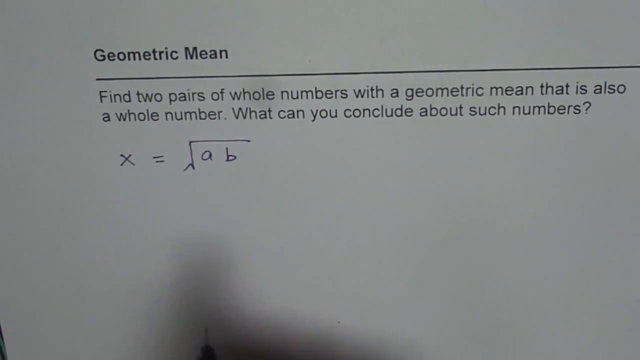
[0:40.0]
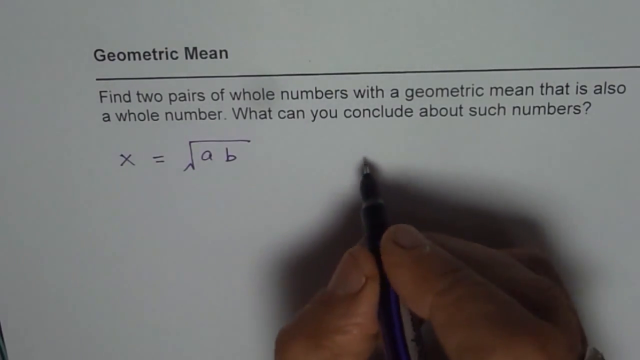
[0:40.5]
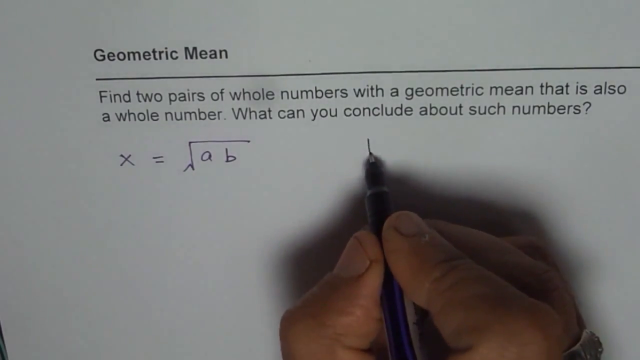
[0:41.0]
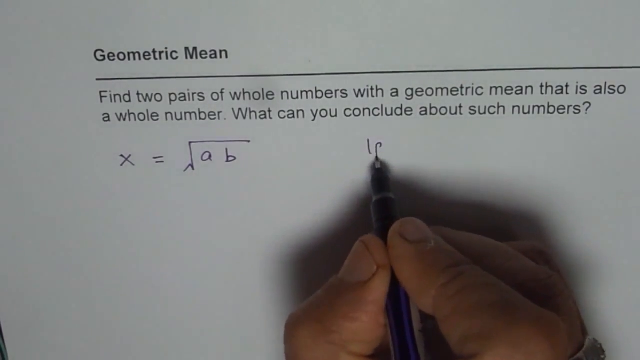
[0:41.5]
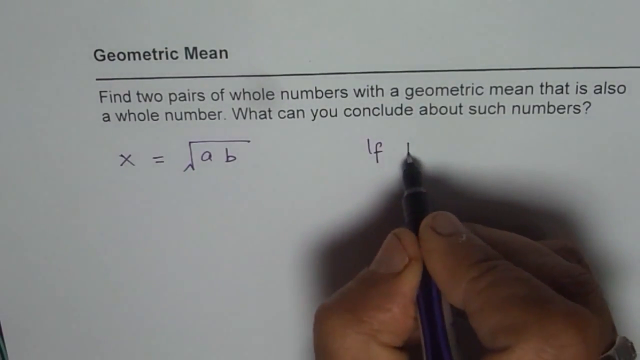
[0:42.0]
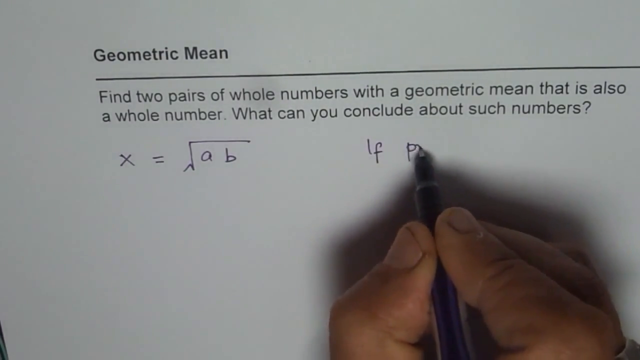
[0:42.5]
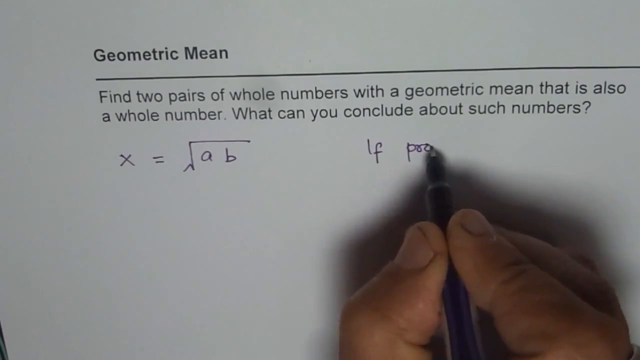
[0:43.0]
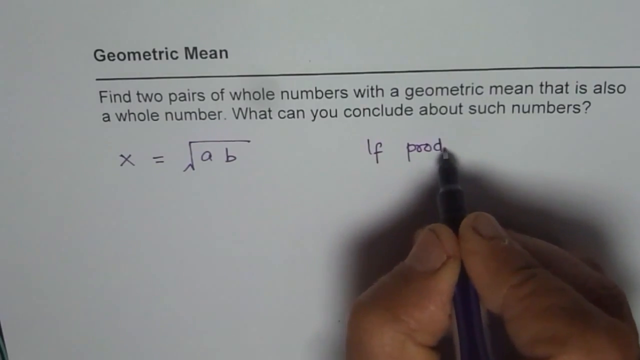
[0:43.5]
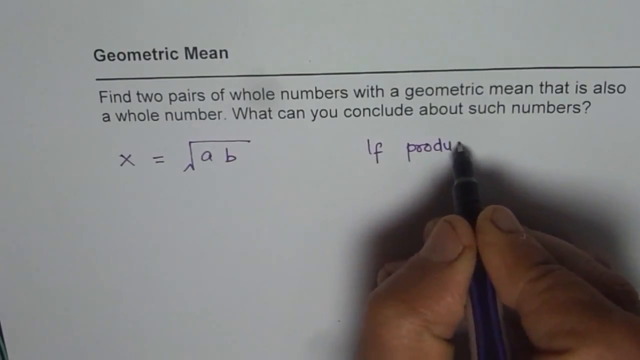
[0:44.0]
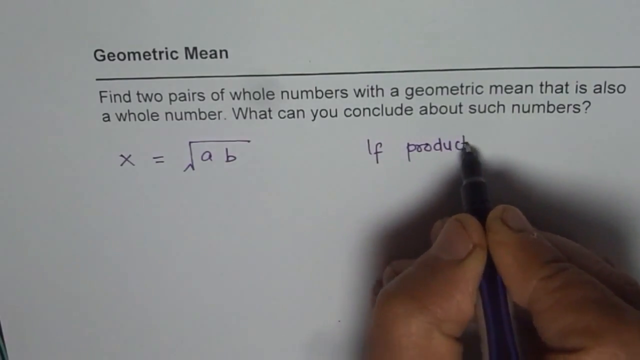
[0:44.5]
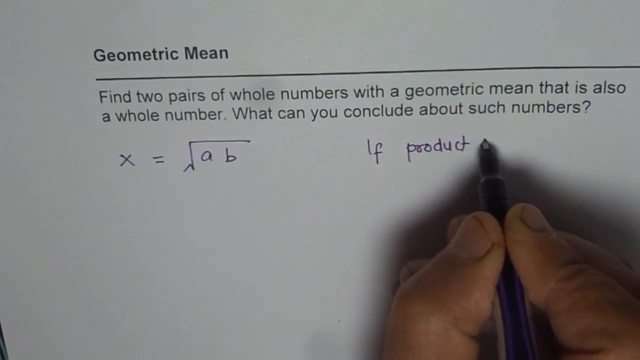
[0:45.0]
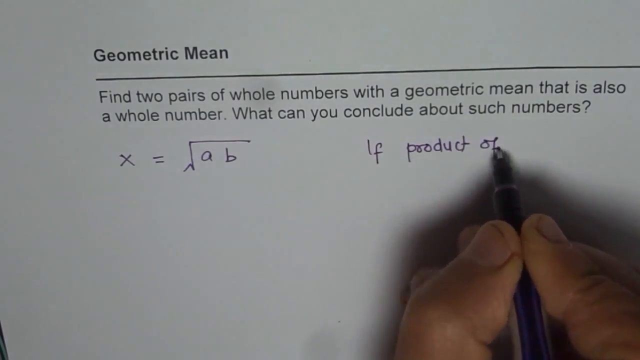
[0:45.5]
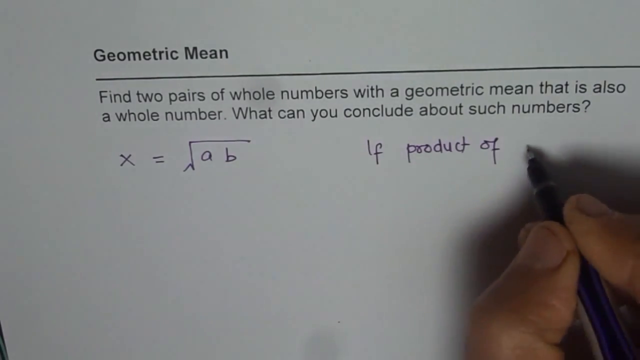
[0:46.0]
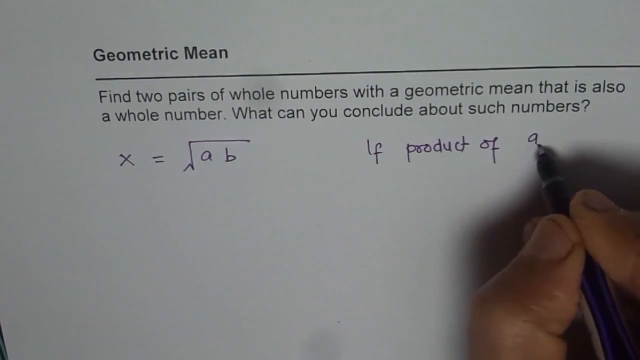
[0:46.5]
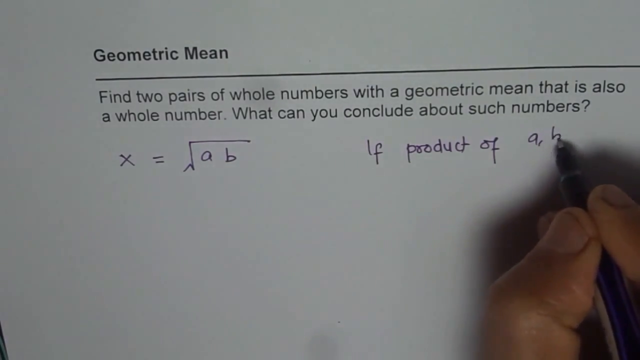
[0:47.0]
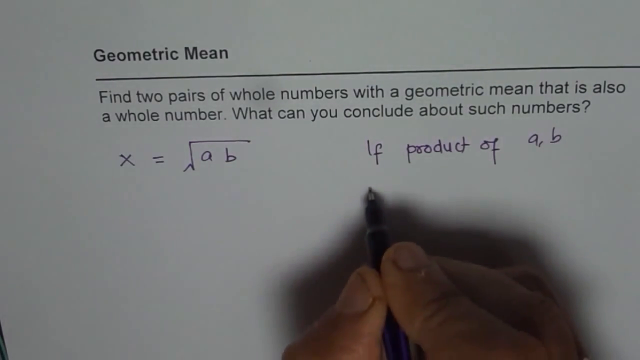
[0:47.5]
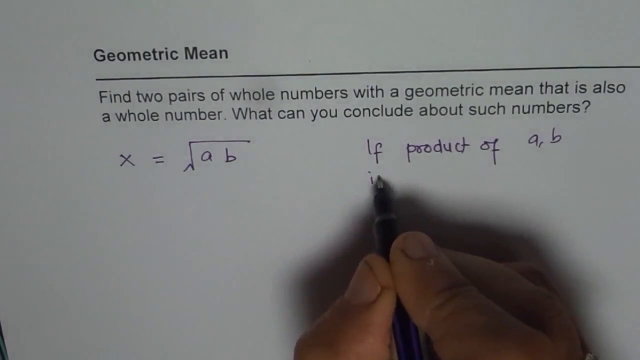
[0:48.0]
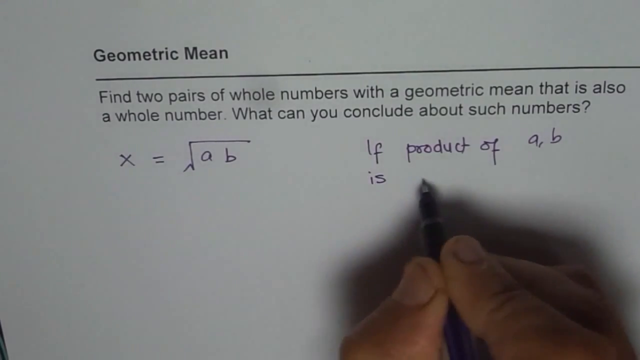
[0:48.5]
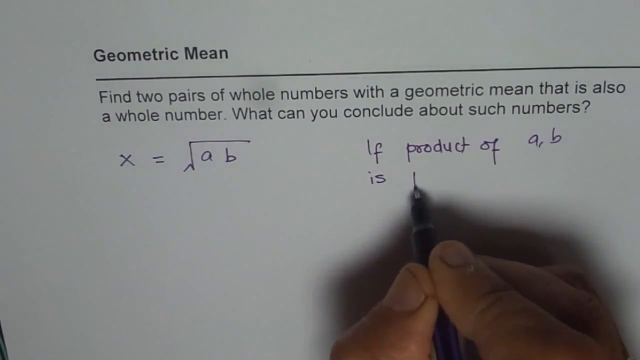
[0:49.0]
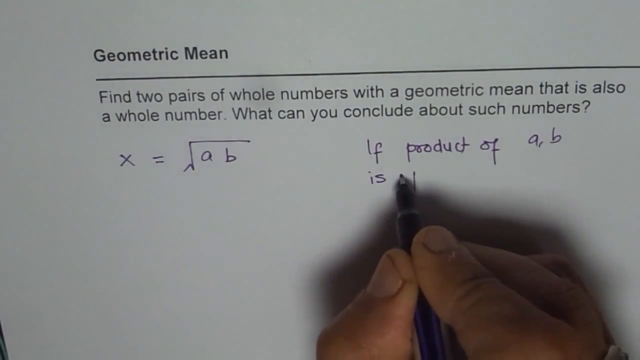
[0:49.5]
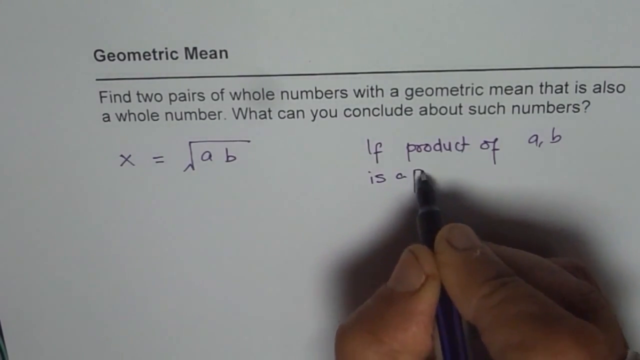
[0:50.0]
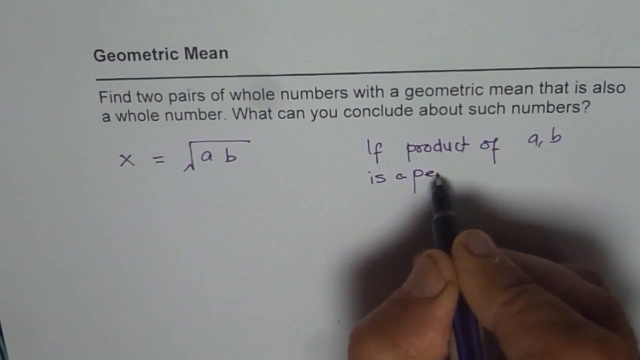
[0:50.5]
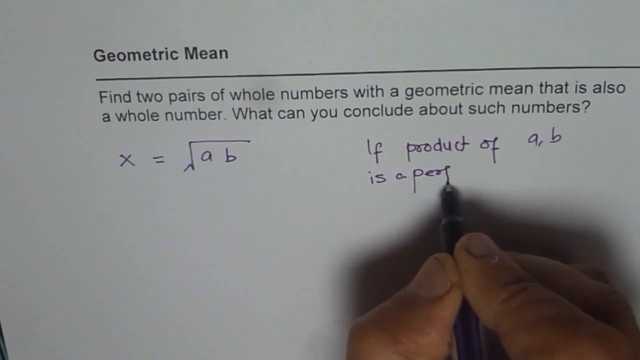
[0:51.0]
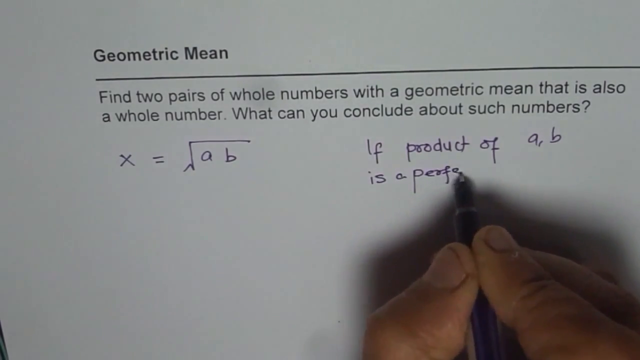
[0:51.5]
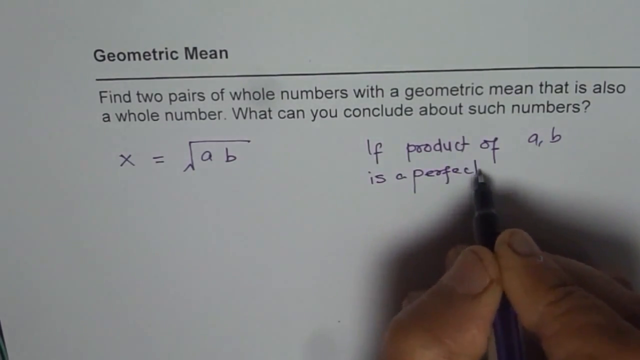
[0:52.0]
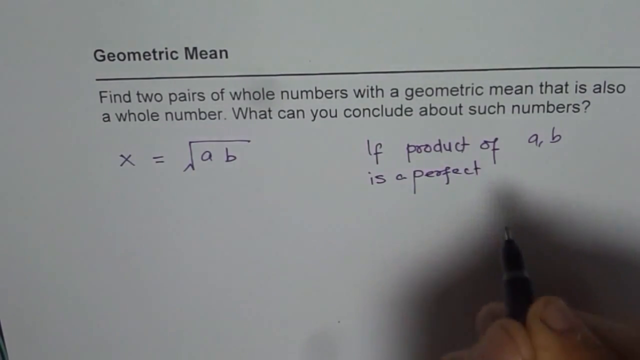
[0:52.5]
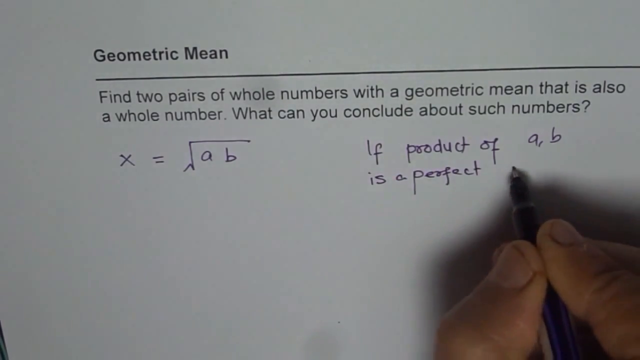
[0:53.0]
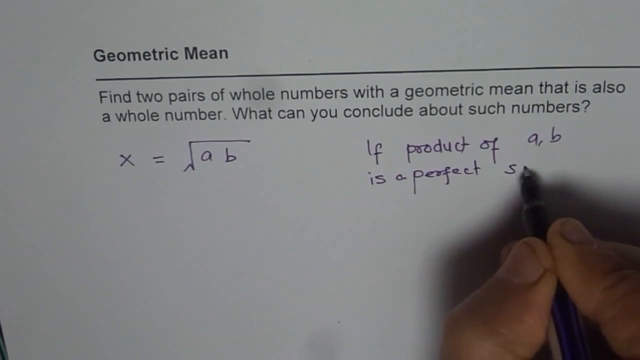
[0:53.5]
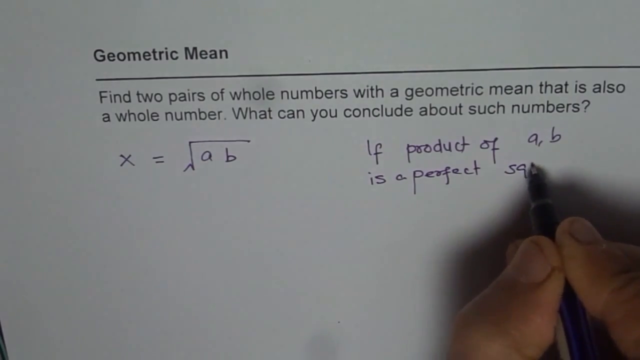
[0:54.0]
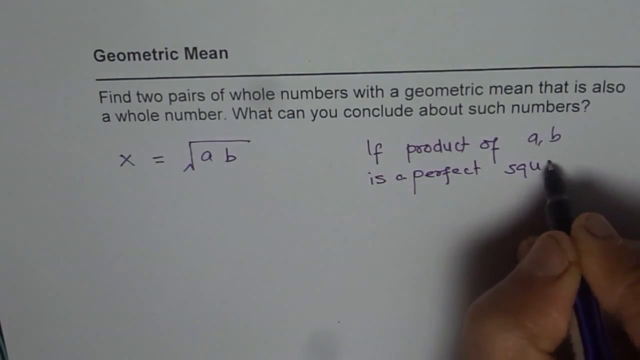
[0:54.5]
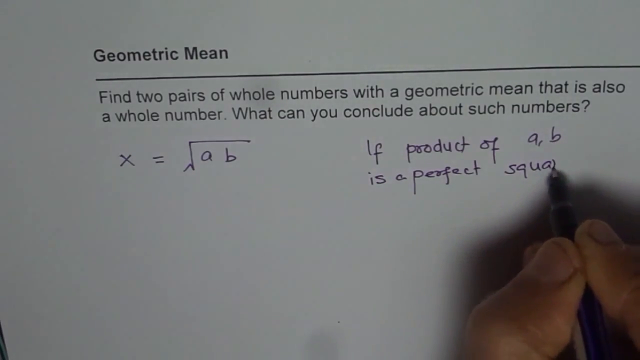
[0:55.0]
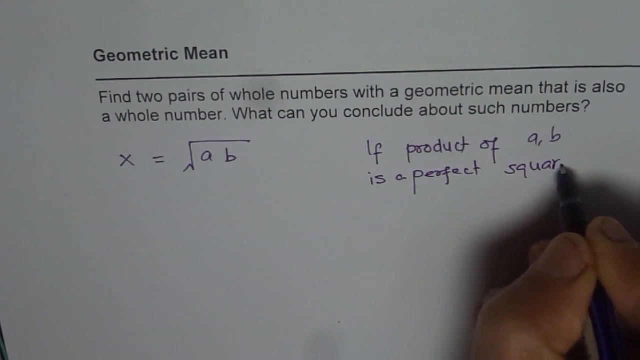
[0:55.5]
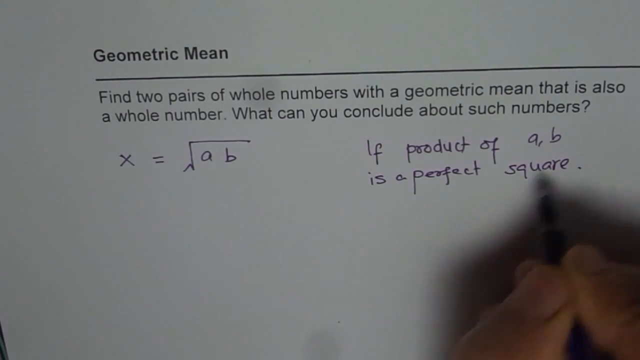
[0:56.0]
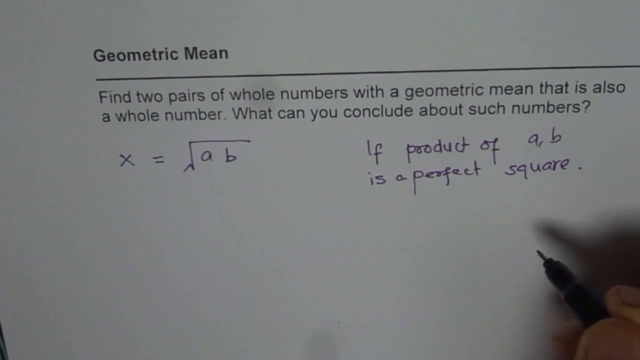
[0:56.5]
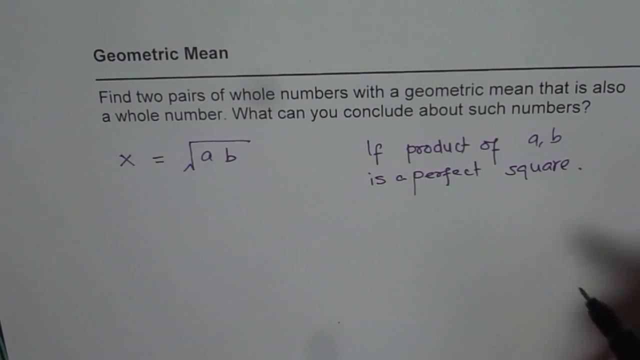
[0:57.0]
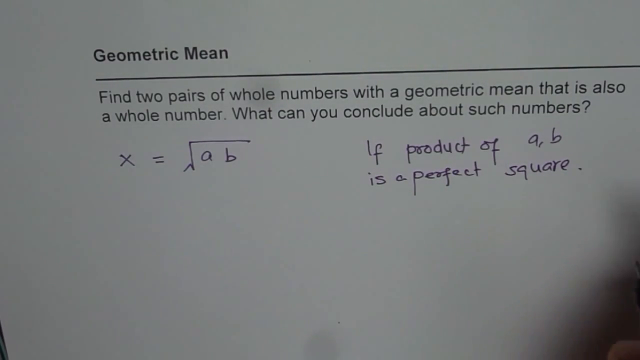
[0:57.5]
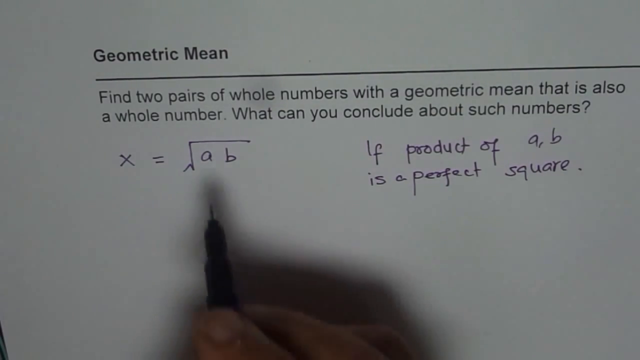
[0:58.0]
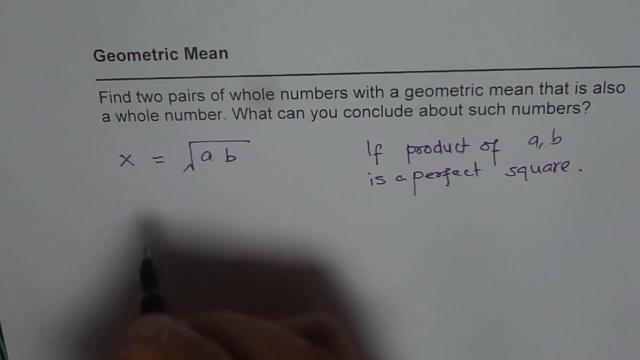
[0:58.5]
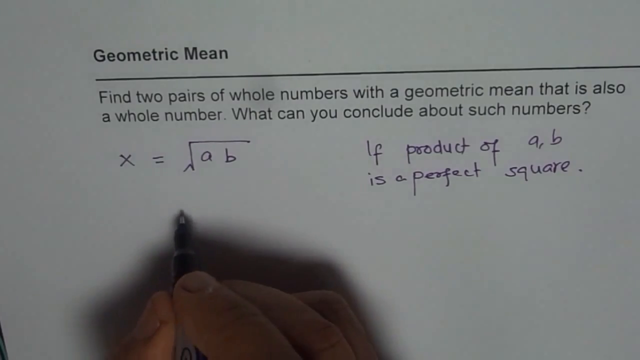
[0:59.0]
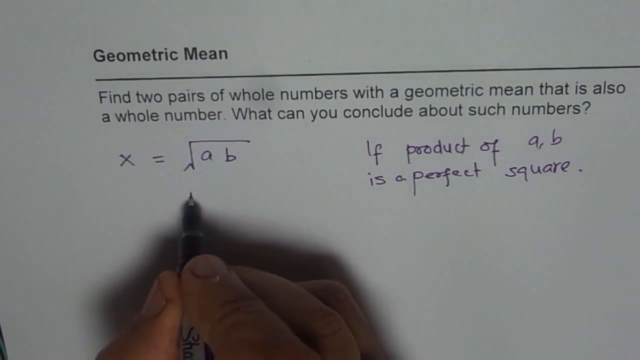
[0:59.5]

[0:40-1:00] The background is the white paper, with the black bold words "geometric means", a solid black line below them spanning the paper, and less bold writing below with the math problem: "Find two pairs of whole numbers with a geometric mean that is also a whole number. What can you conclude about such numbers?" Below that is the equation being worked out in handwriting, with the X, the equal sign and the lowercase a and b. The man's right hand, with dirty fingernails and bad cuticles, holding the black pen with the purple stripe near the end, comes back into the screen. To the right of the equation he previously wrote, he begins writing in cramped but neat handwriting "If product of A B is a perfect square". He then moves the pen from the right of the screen over to where A and B are, and moves his hand down and out of the screen.